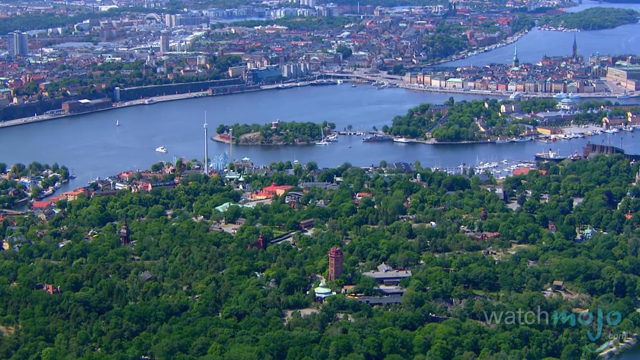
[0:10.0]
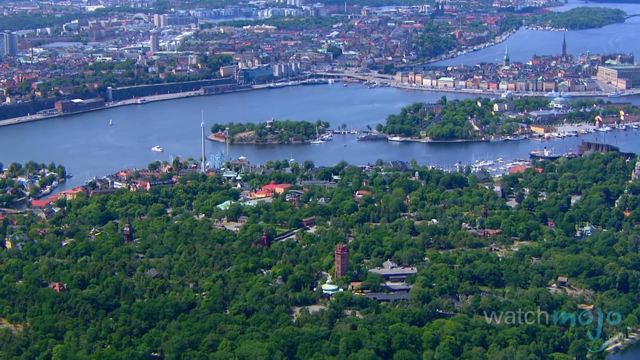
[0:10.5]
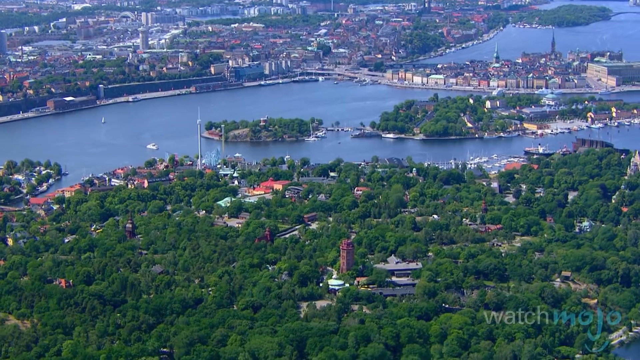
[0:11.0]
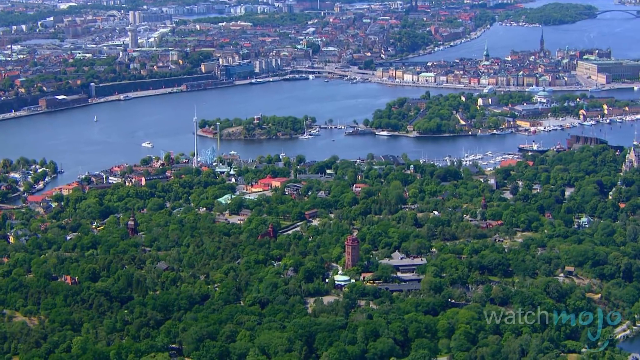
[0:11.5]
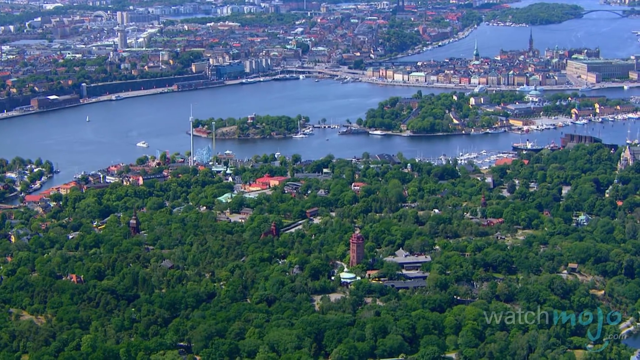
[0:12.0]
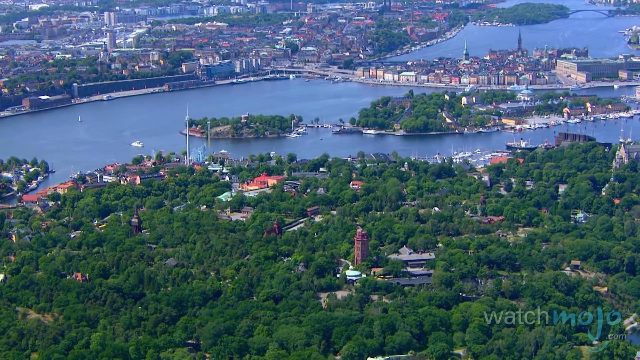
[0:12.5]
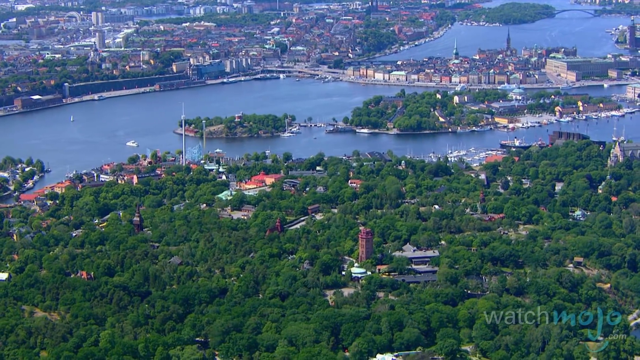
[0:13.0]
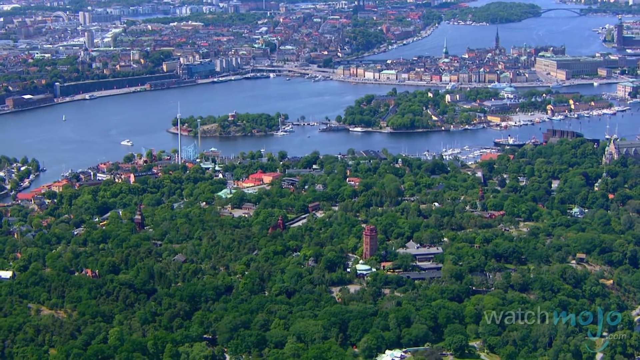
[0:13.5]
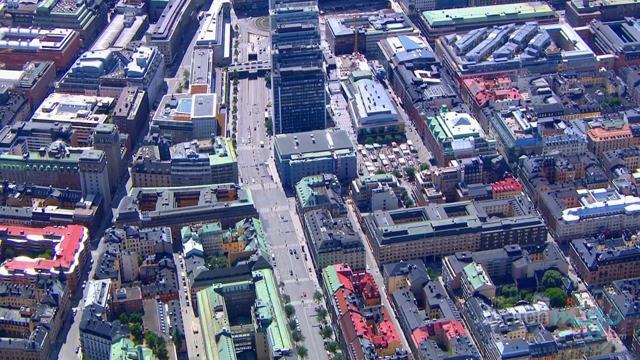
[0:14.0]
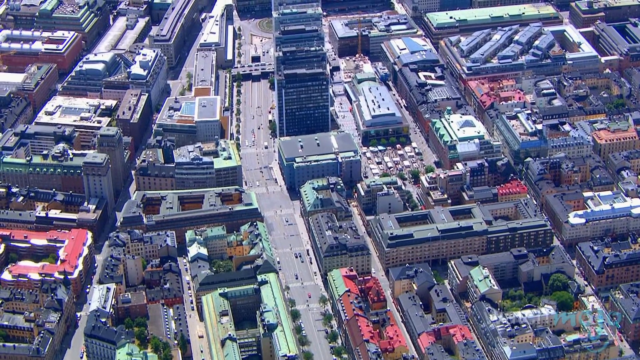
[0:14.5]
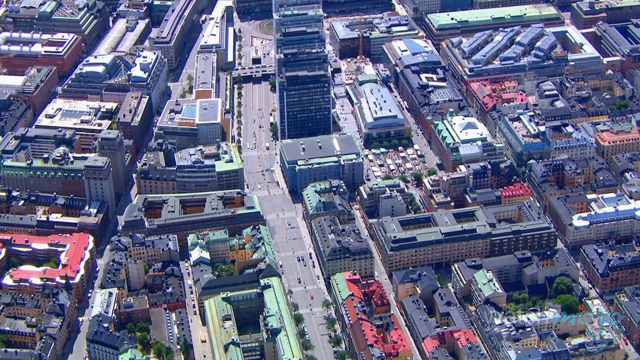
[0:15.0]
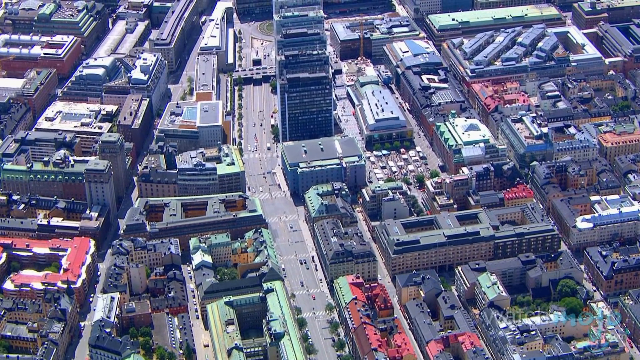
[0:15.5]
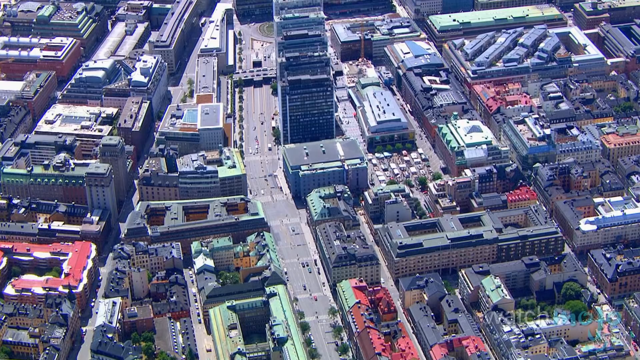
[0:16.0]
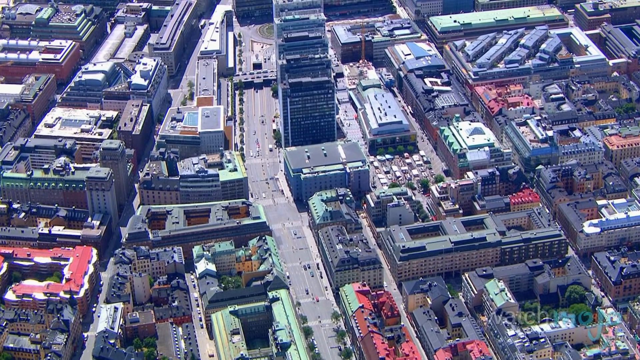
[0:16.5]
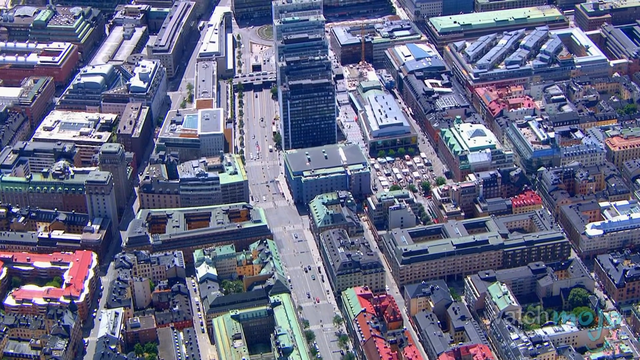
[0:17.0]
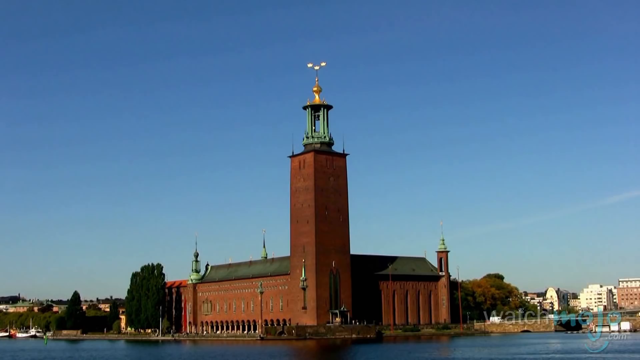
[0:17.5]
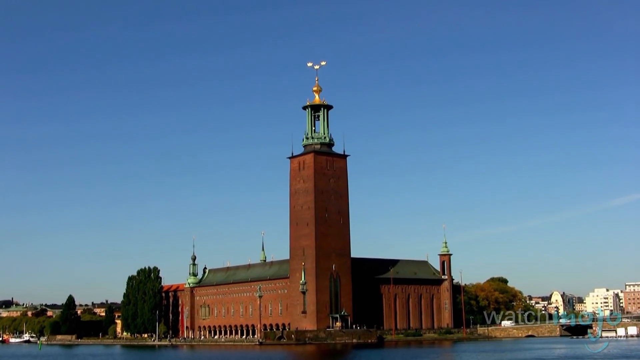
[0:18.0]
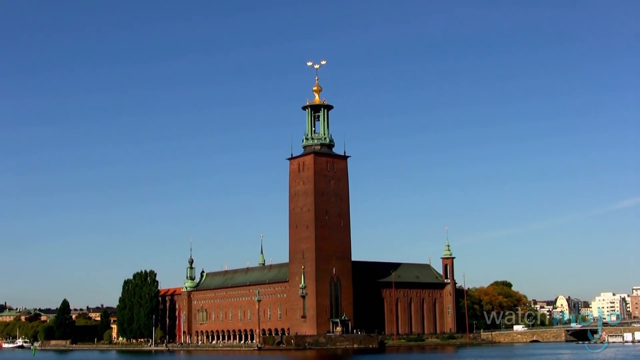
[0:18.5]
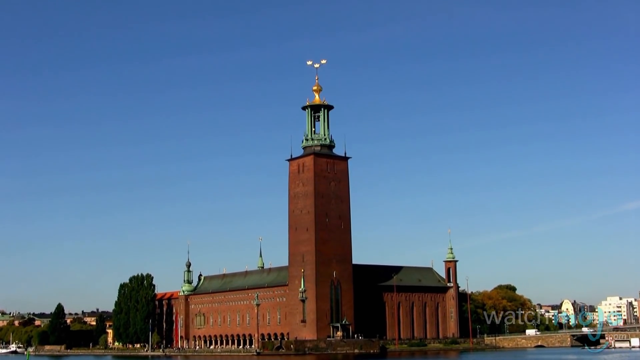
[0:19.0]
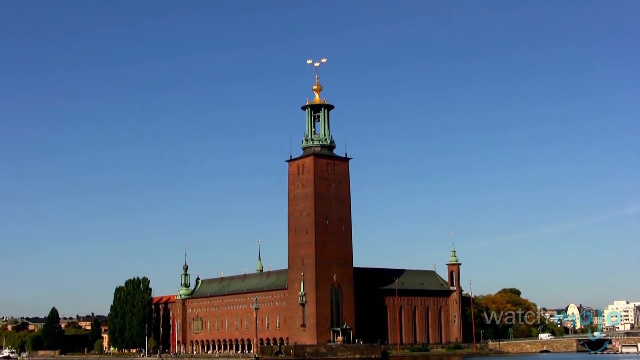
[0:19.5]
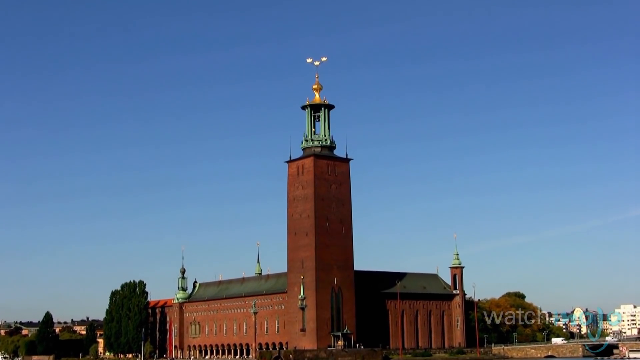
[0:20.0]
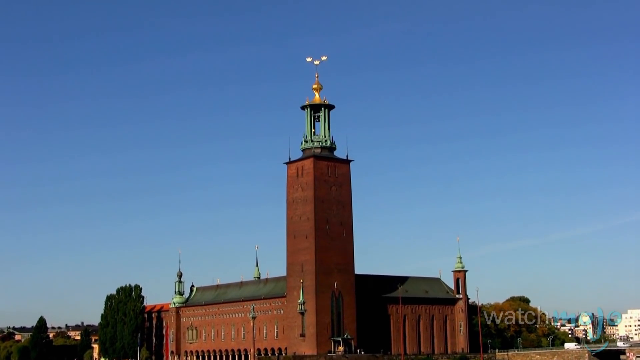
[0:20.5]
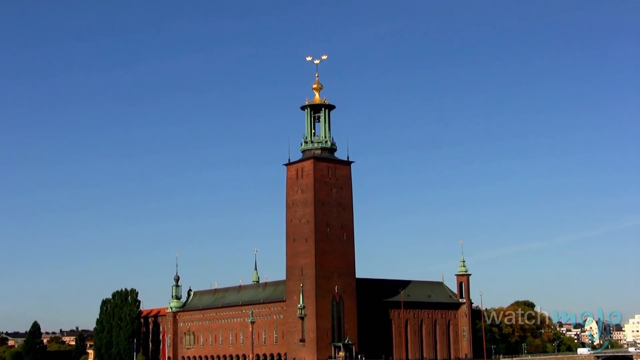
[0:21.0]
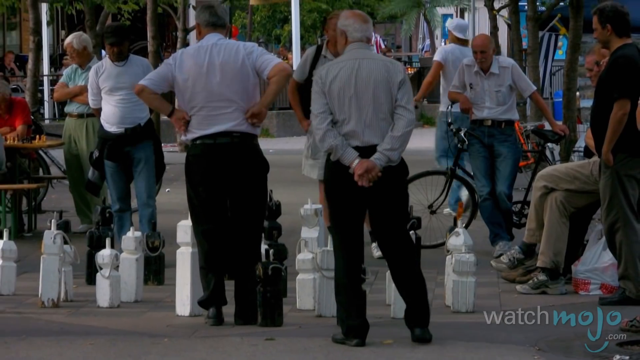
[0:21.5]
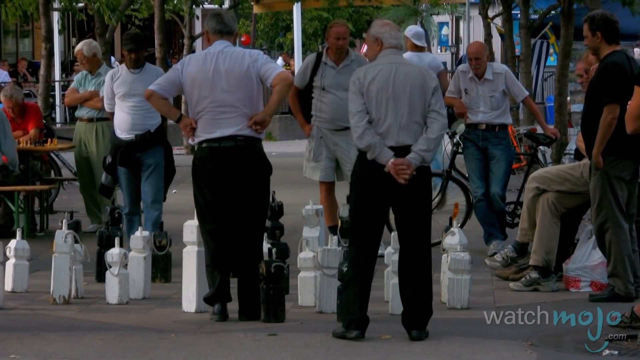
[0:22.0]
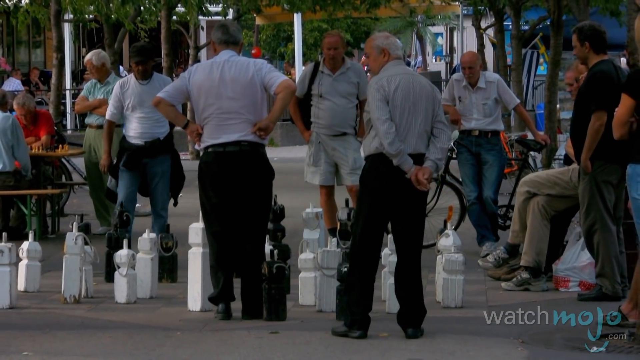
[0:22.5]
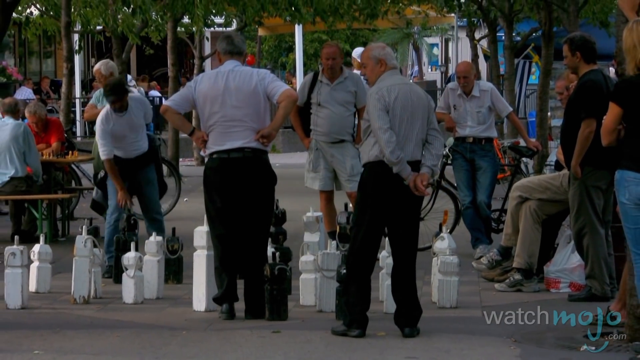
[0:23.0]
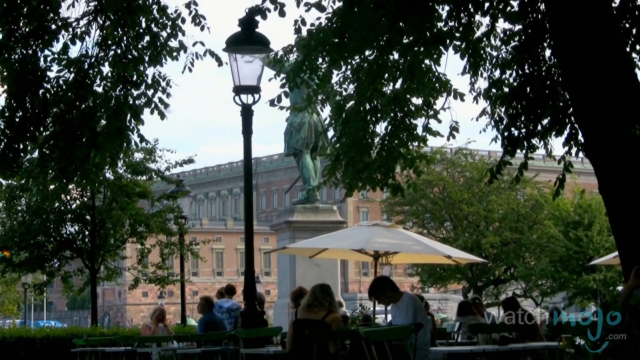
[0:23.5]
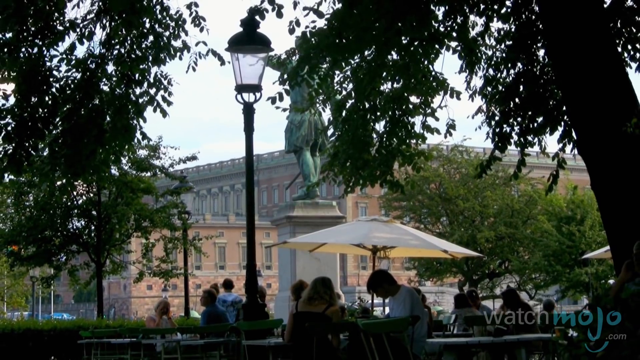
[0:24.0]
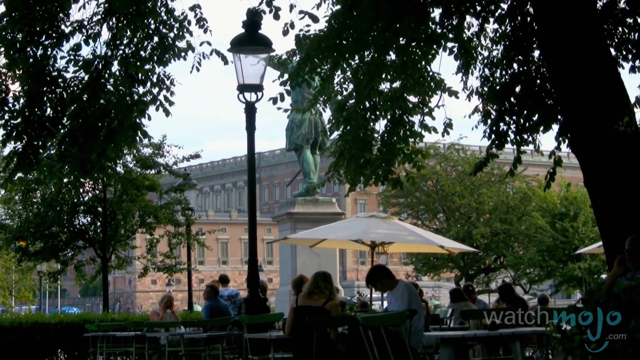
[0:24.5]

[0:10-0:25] The aerial view of Stockholm, Sweden, starts with a landscape of trees and water in the city bordering the downtown area, then spans to downtown, where dozens of buildings of various heights stand very close together, separated by wide streets that look like maybe six lanes, maybe three each way. There may be one really tall building, perhaps 30 to 40 floors, while the rest may be ten stories or less. Some buildings have red rooftops, some green and some brown. The next scene pans to a red brick building that looks like it could be a cathedral or maybe a university, with a monument on top of a tower at its corner; the tower is maybe 30 stories or so high, maybe double the height of the rest of the building. The view then pans to gentlemen in a park who appear to be playing chess with human-sized chess pieces, maybe about three feet tall, on the sidewalk; they are standing and gazing down, strategizing their next move. It then pans to another park area where people are sitting and eating at tables, and there is a statue.